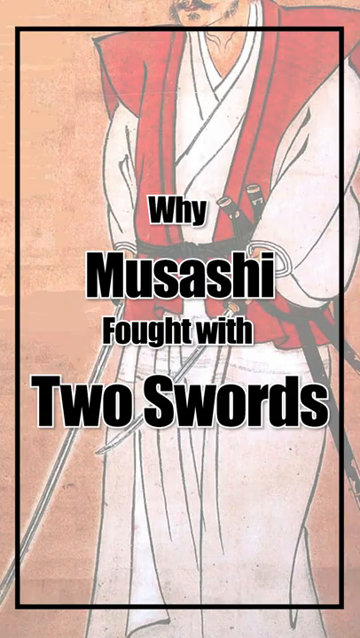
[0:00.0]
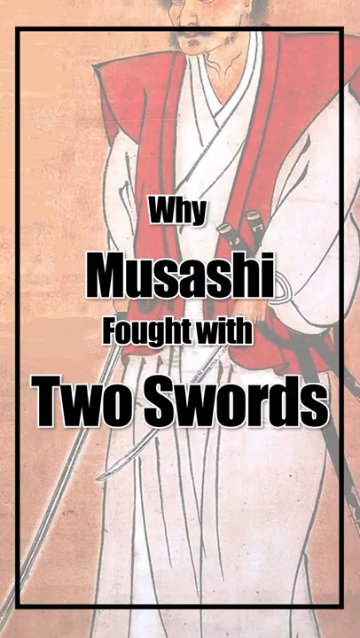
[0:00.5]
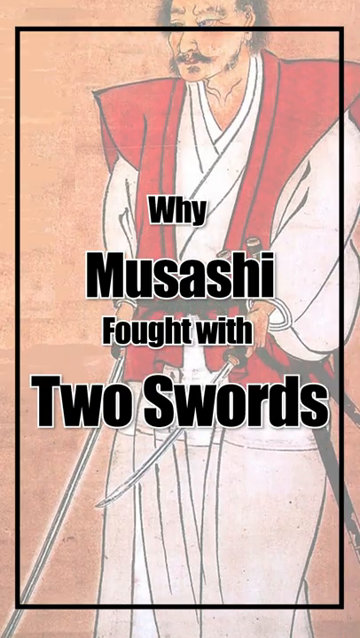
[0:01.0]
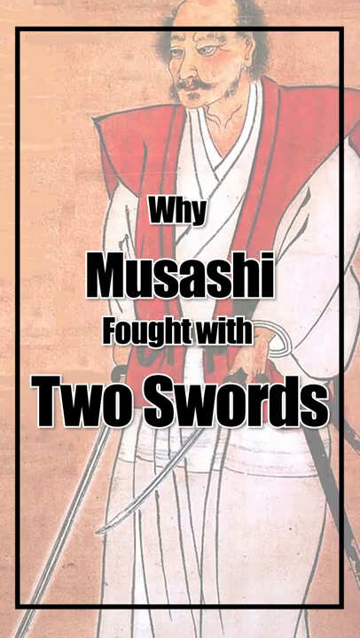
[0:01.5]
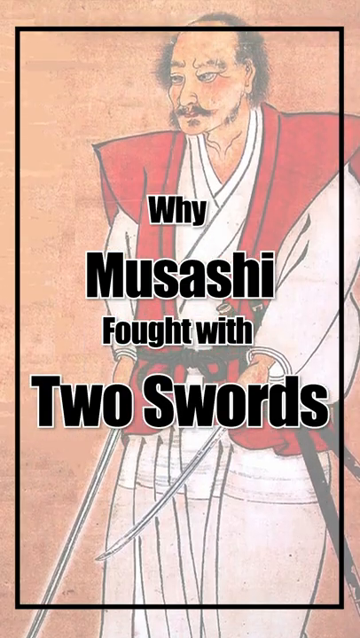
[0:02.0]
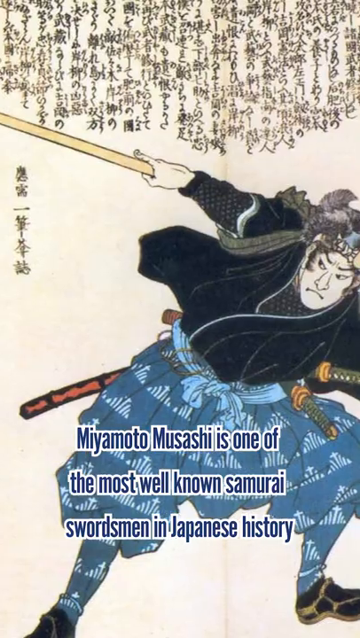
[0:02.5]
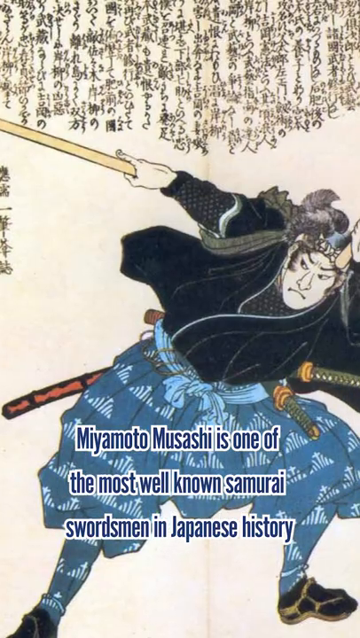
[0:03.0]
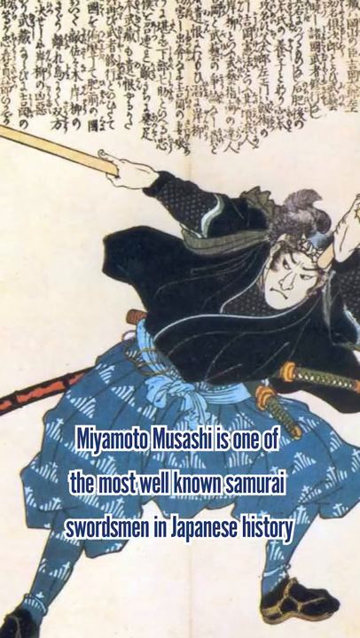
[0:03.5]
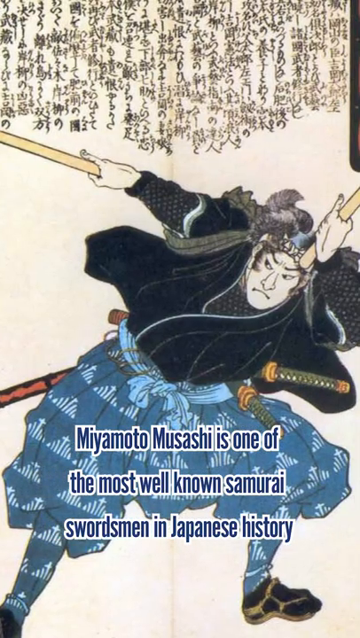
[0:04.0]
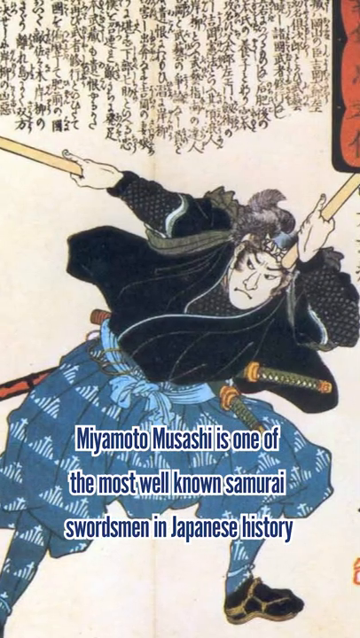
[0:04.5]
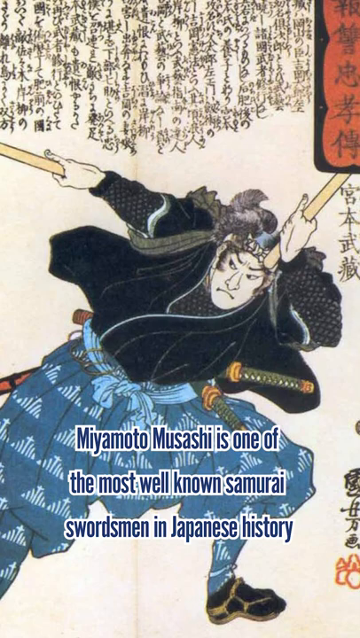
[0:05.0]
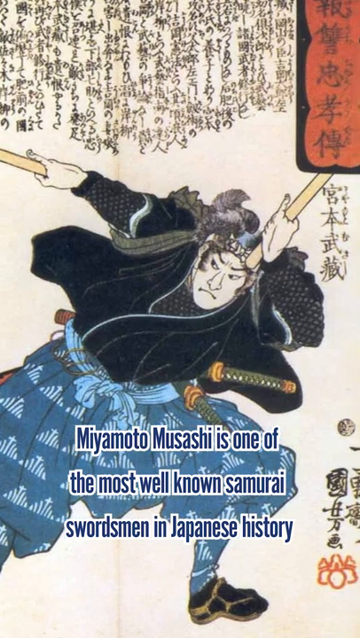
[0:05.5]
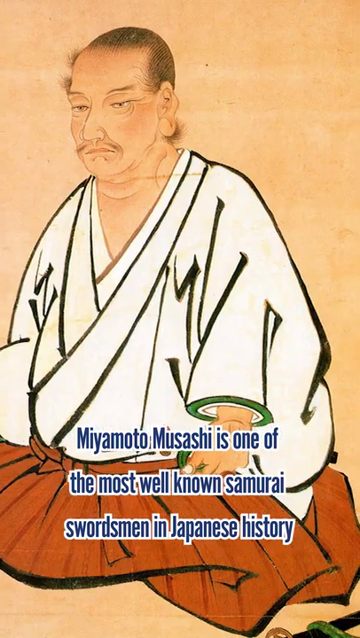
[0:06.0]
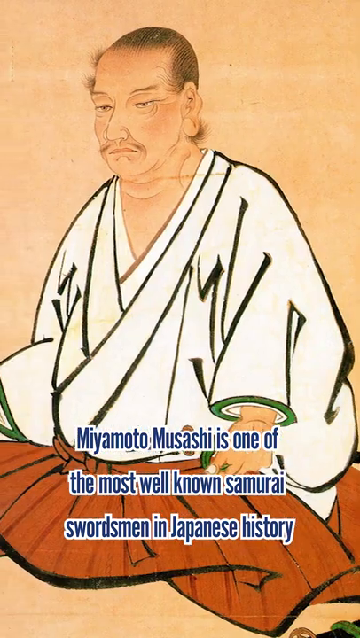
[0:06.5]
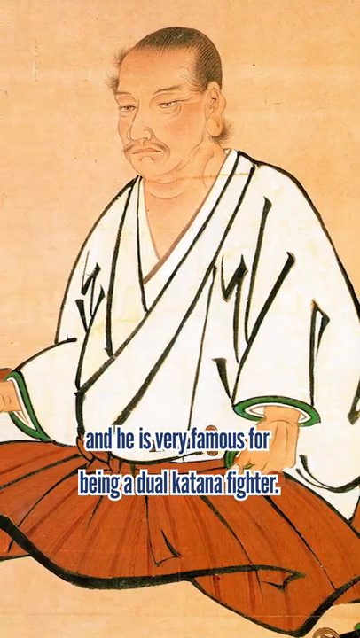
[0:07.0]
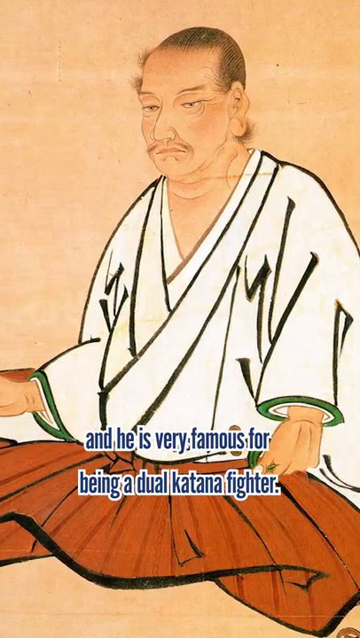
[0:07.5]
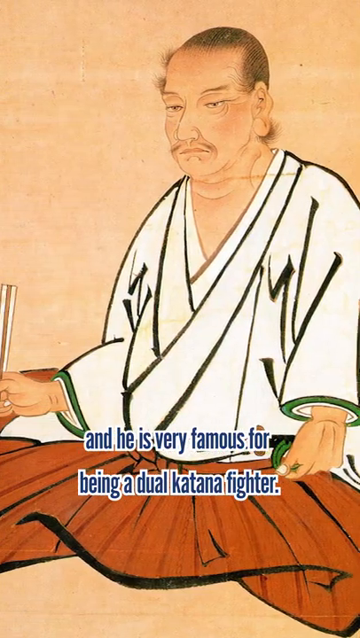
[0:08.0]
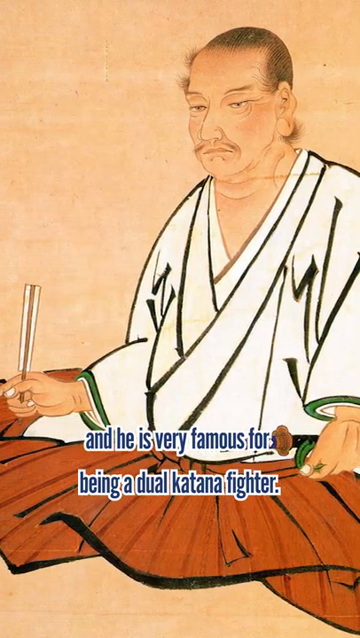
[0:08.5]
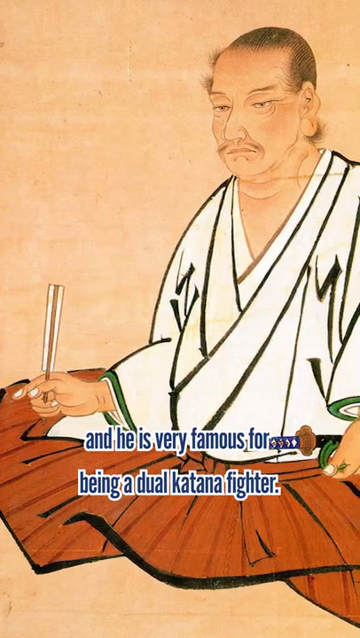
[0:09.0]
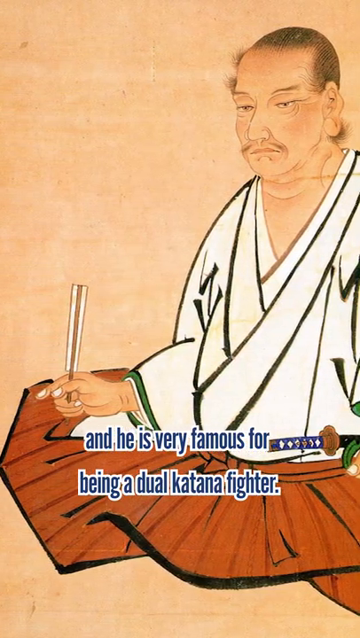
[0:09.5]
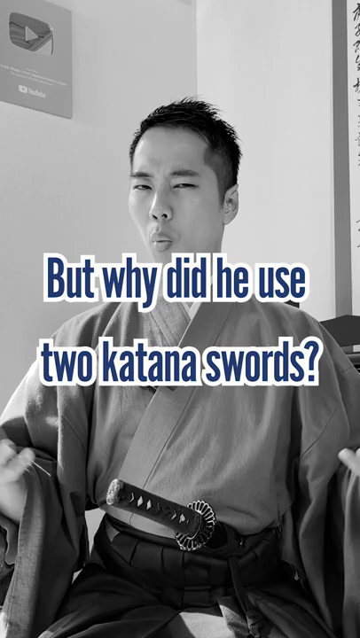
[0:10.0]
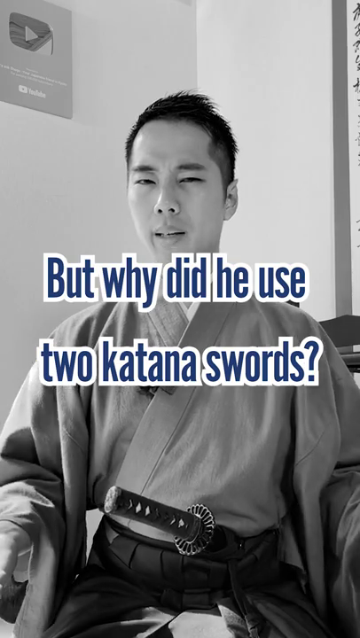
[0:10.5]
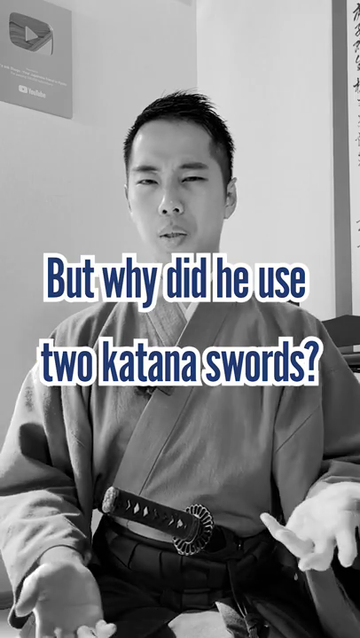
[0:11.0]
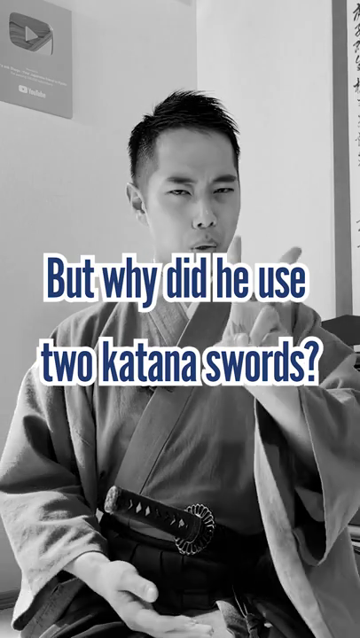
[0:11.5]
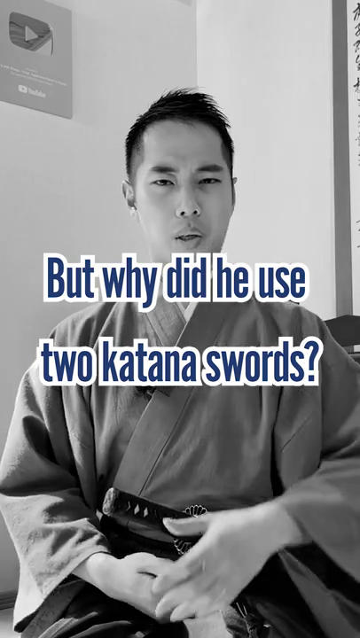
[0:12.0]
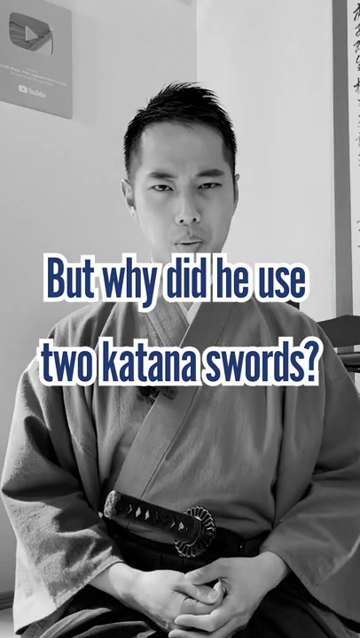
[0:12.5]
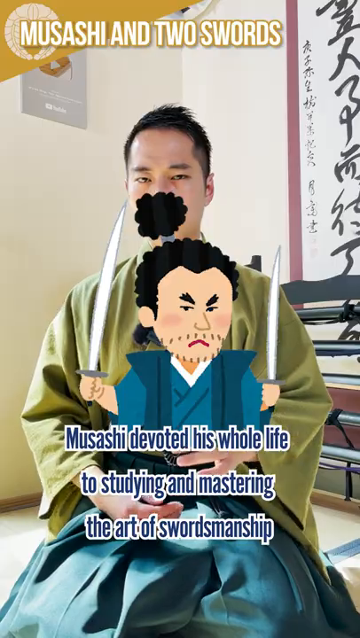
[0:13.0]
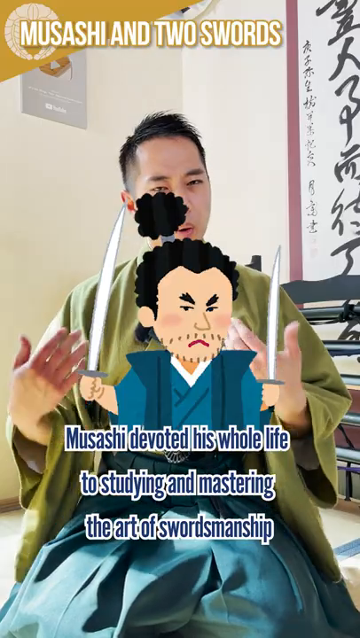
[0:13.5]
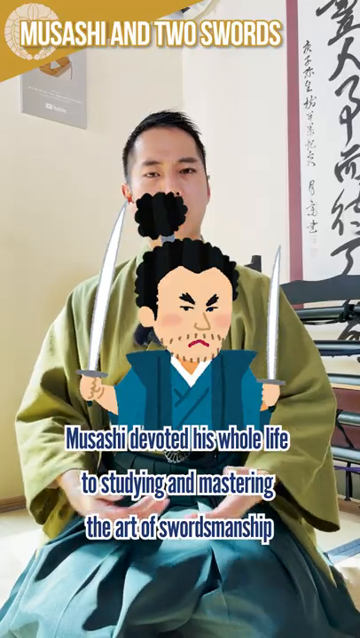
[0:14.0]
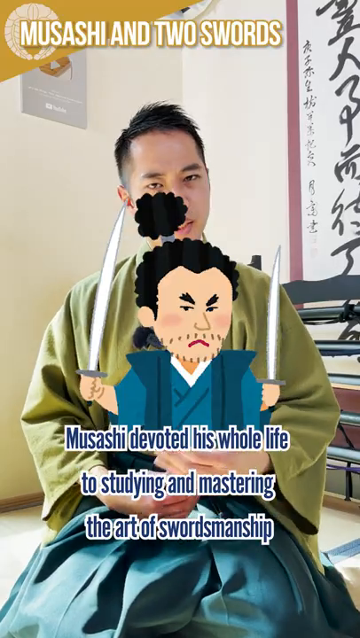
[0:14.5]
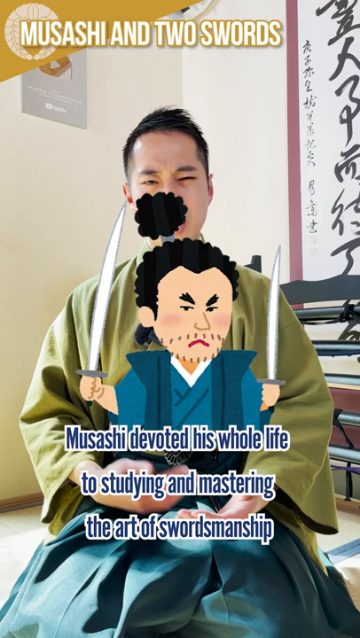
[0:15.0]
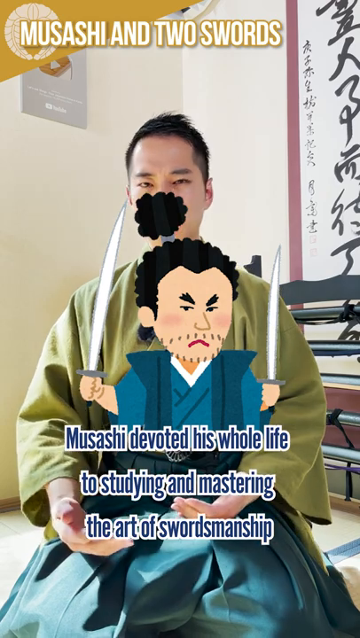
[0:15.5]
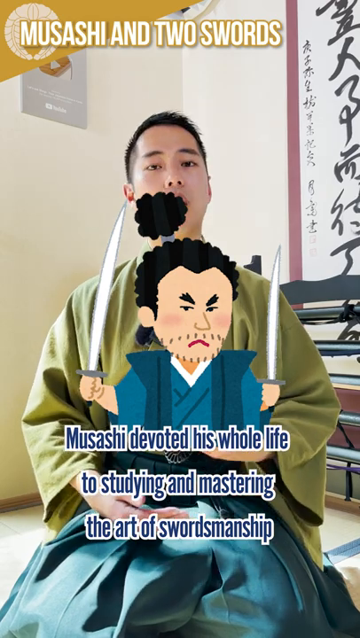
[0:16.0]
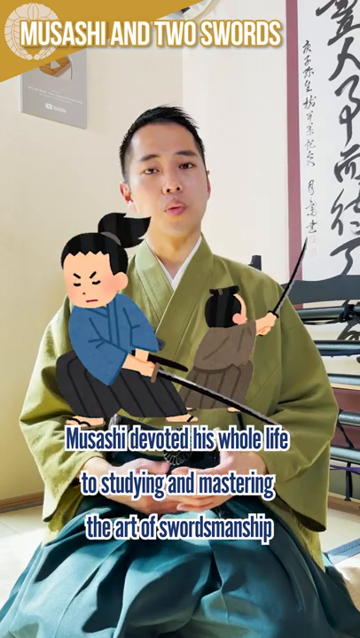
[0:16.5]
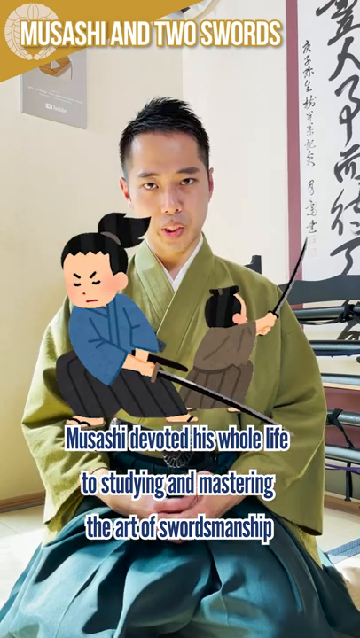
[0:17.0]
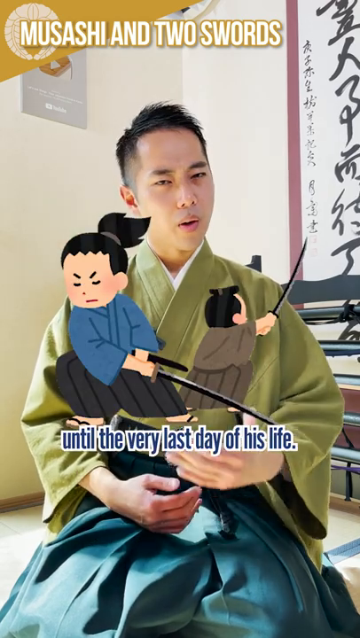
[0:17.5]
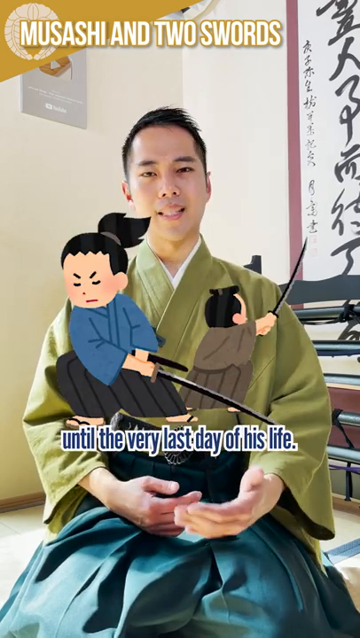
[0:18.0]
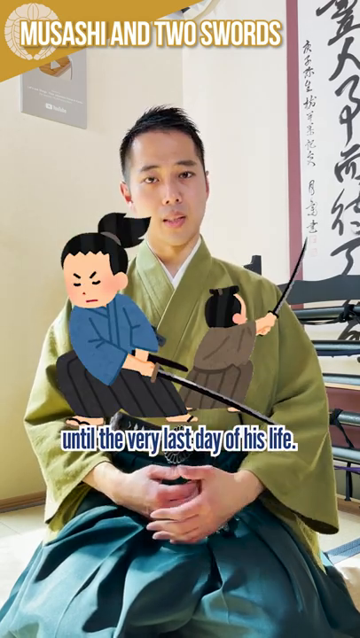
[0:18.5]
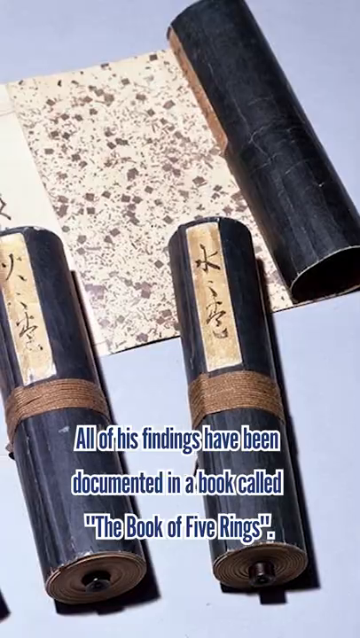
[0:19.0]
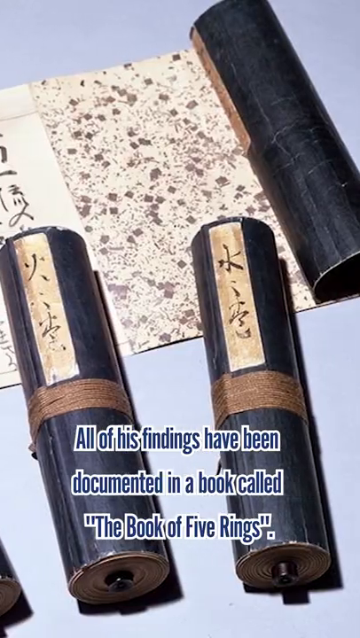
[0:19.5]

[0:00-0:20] A speaker dressed in traditional samurai clothing appears in the video.